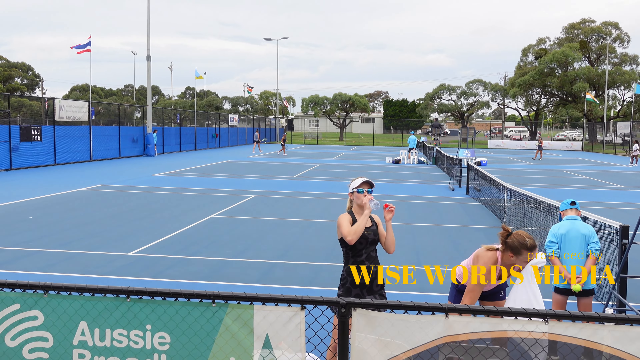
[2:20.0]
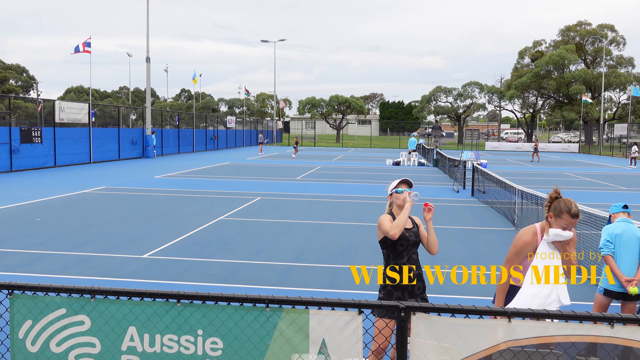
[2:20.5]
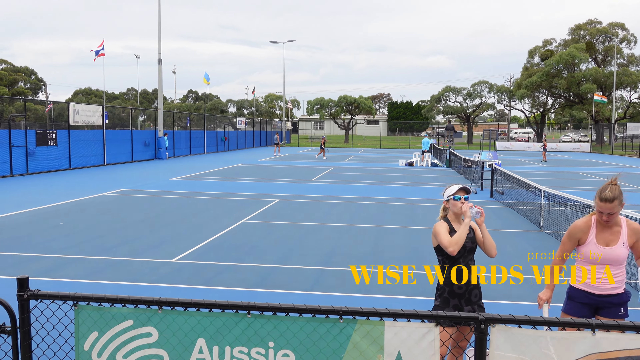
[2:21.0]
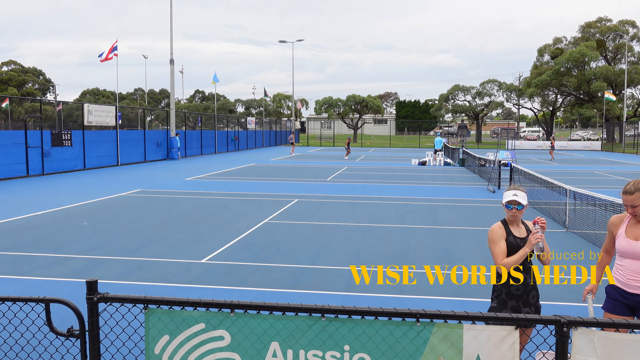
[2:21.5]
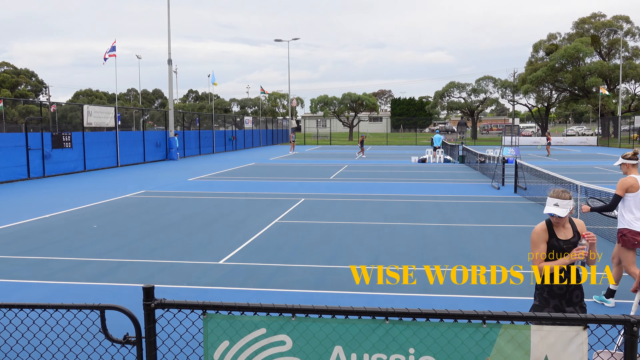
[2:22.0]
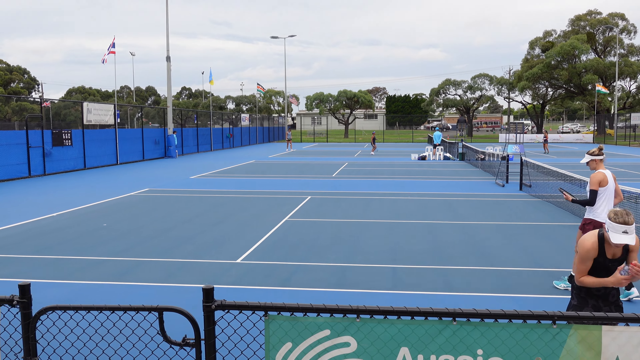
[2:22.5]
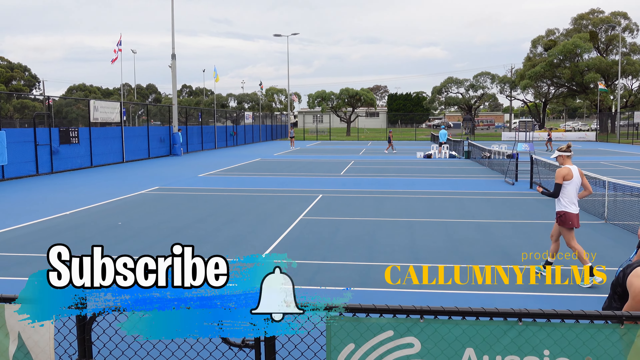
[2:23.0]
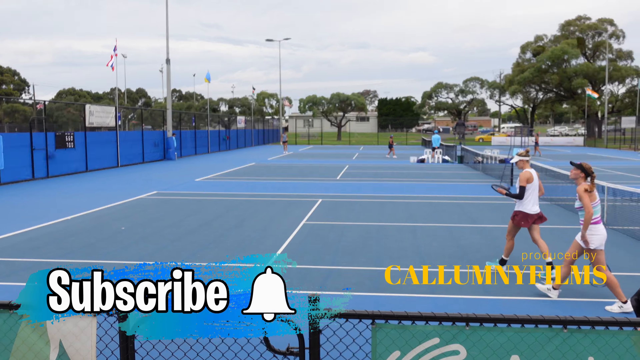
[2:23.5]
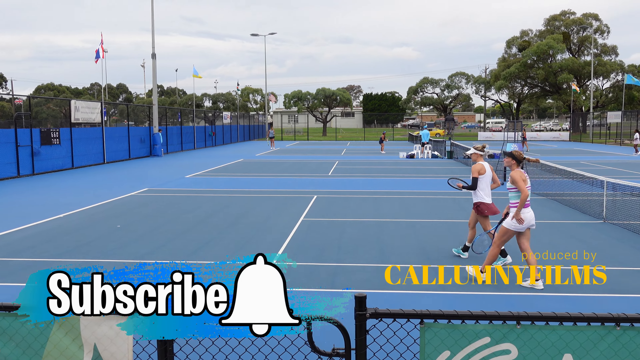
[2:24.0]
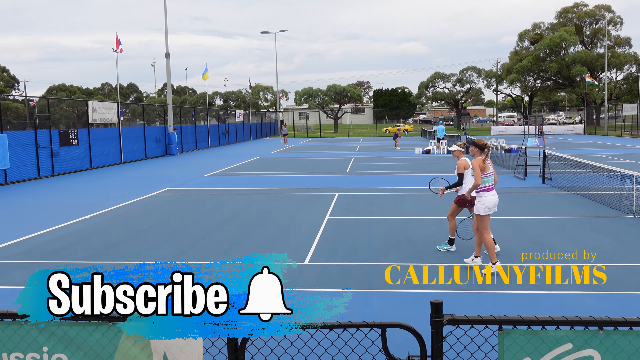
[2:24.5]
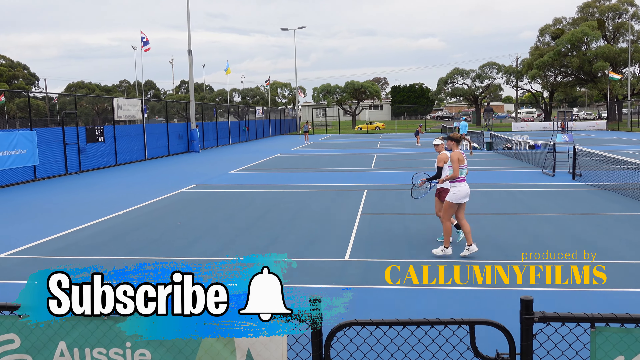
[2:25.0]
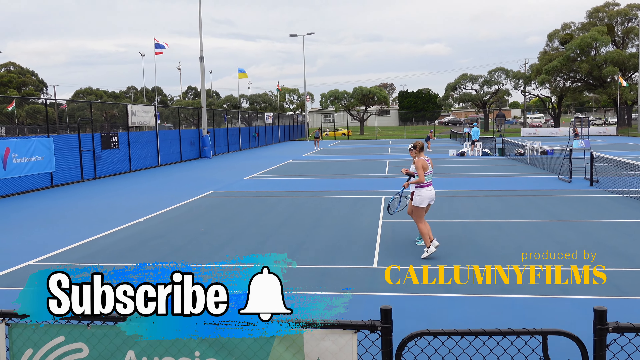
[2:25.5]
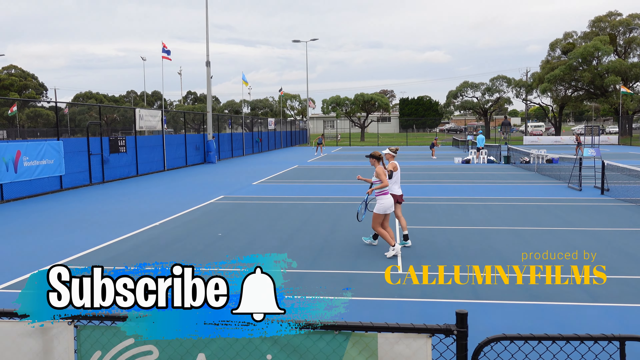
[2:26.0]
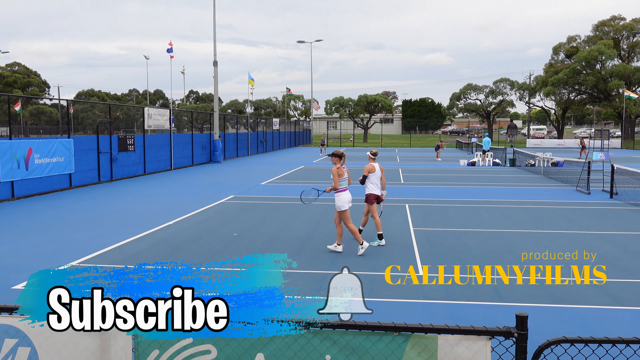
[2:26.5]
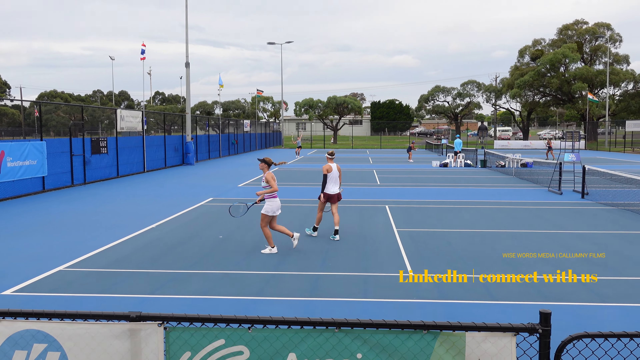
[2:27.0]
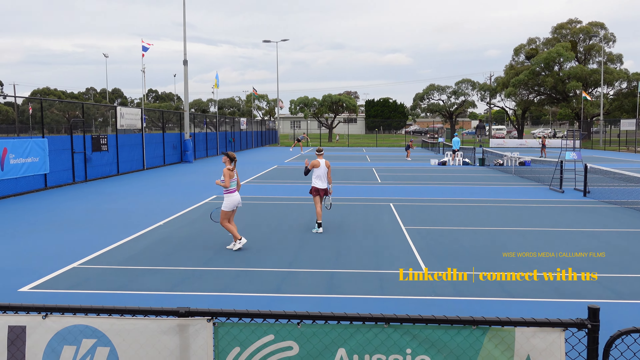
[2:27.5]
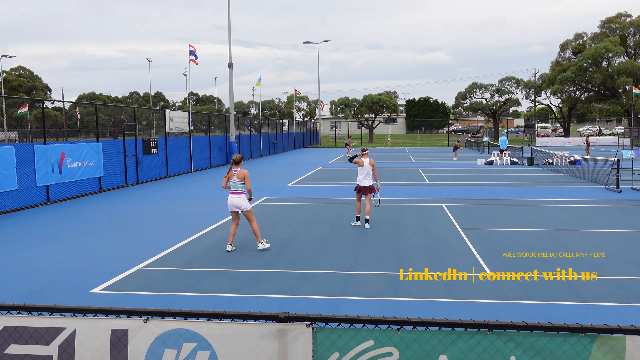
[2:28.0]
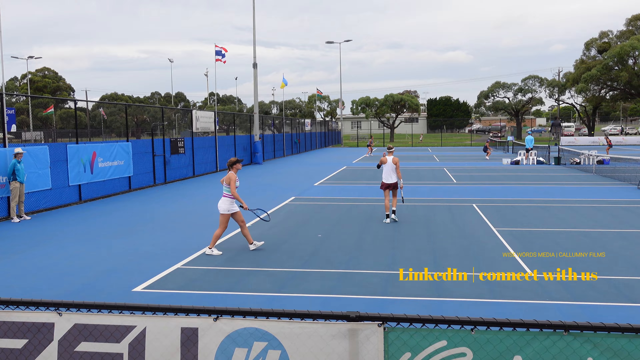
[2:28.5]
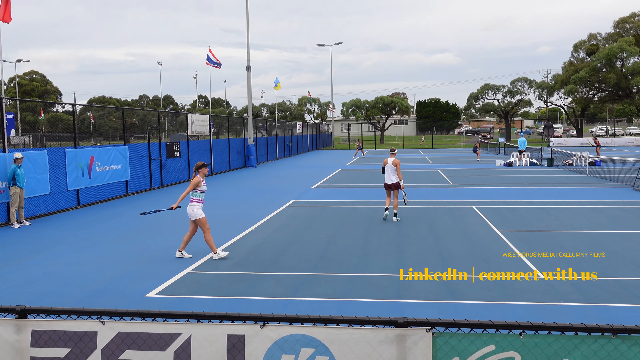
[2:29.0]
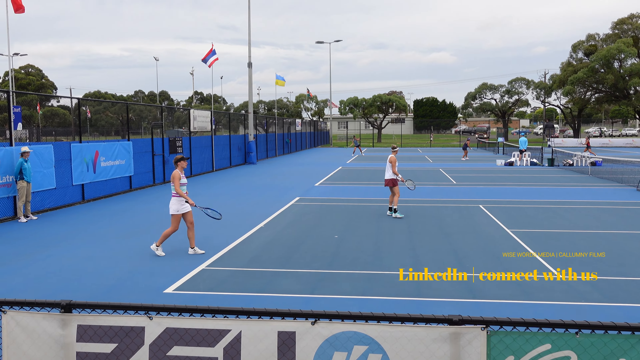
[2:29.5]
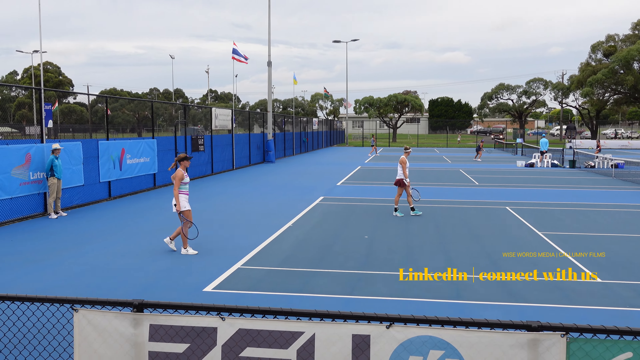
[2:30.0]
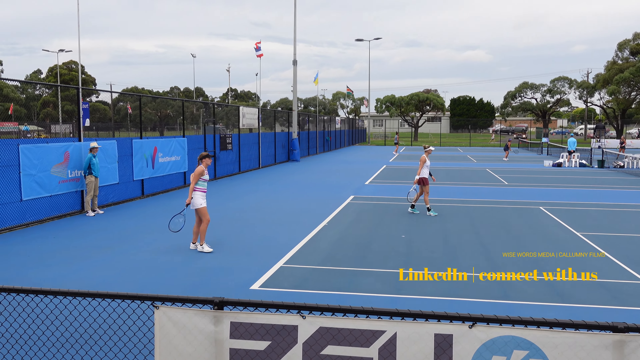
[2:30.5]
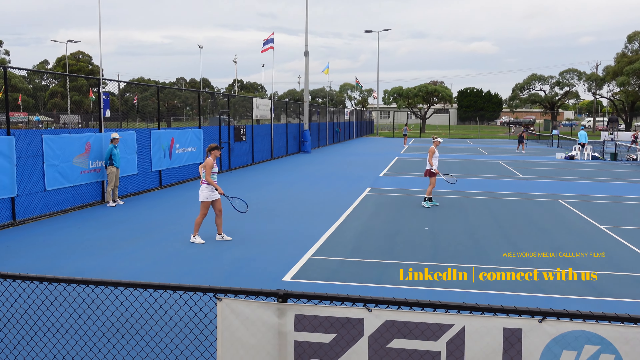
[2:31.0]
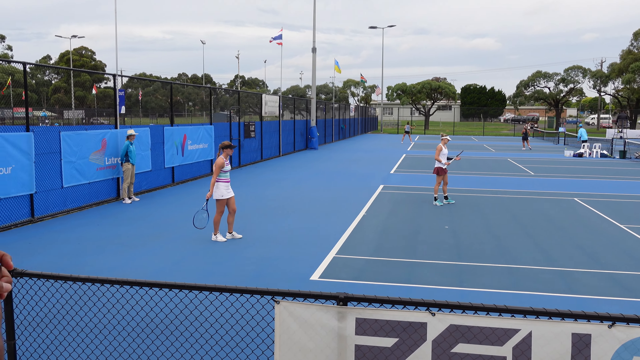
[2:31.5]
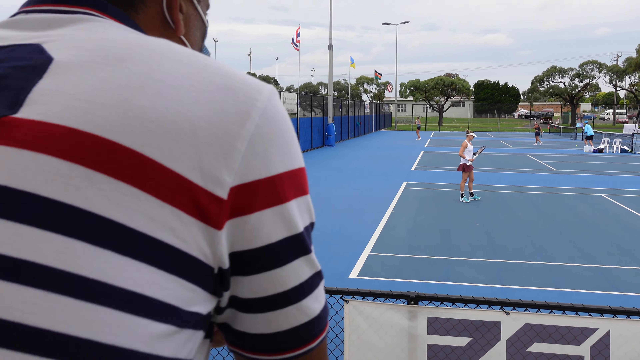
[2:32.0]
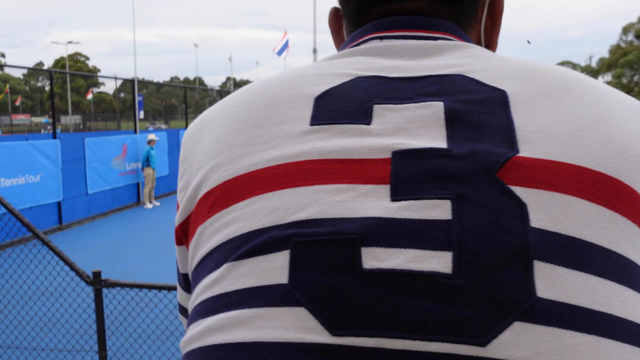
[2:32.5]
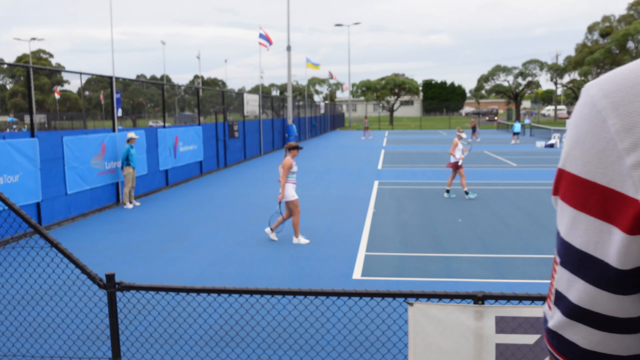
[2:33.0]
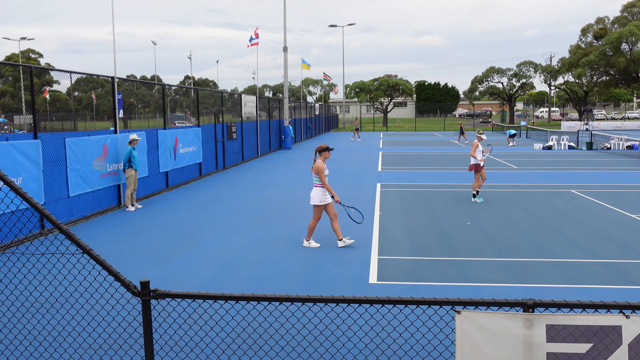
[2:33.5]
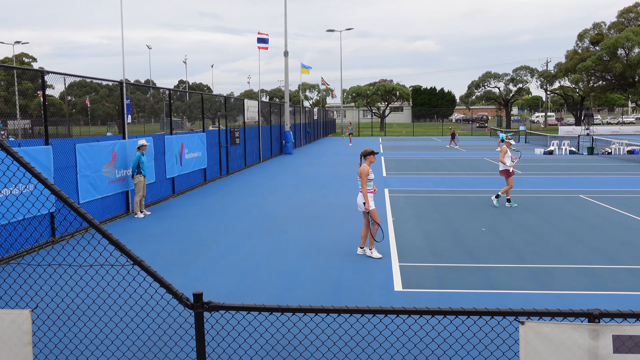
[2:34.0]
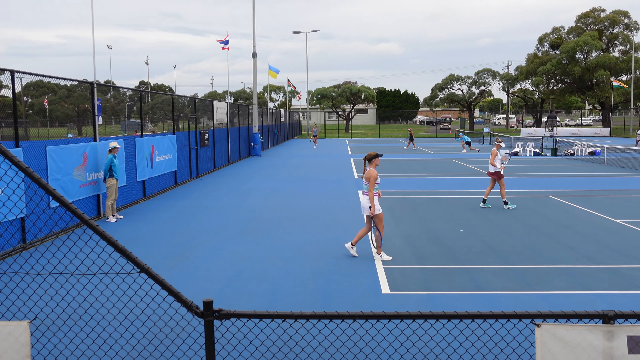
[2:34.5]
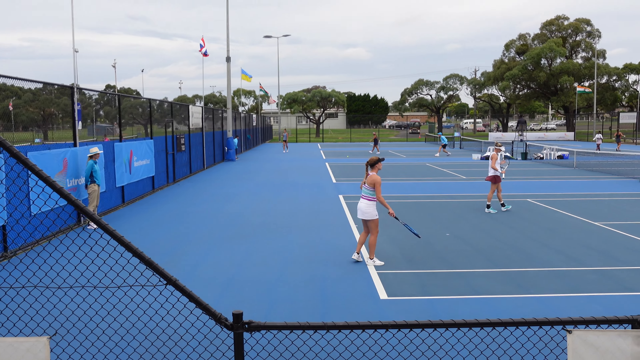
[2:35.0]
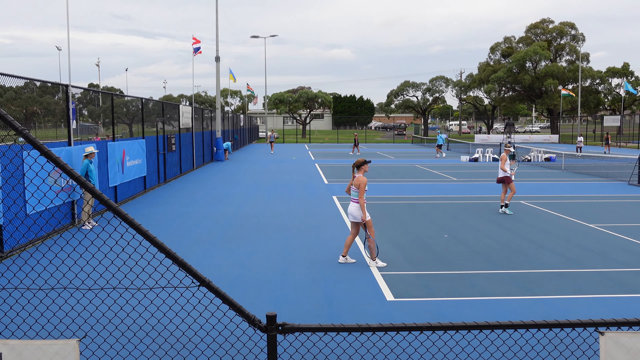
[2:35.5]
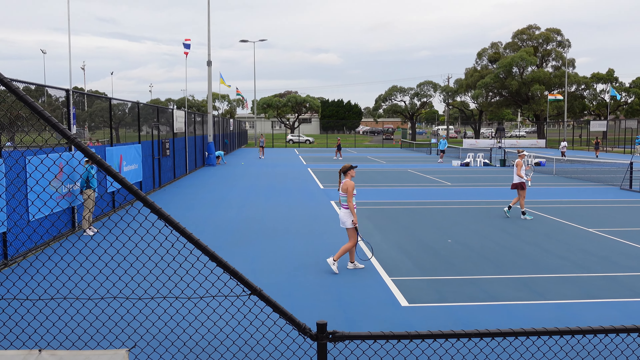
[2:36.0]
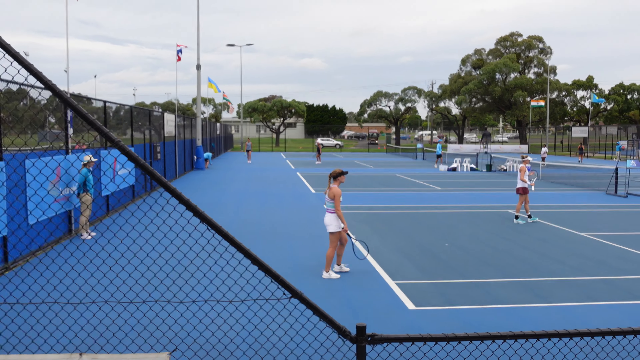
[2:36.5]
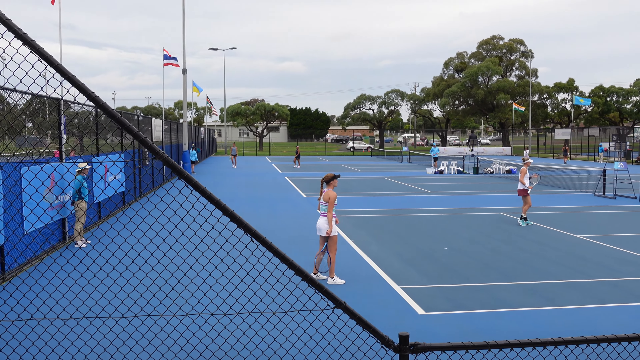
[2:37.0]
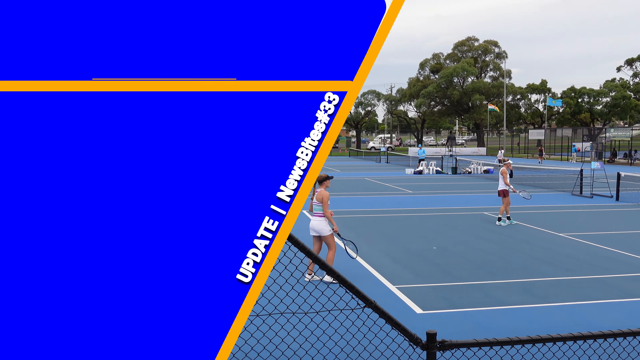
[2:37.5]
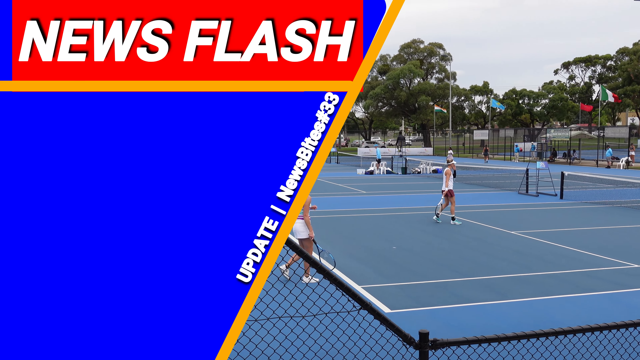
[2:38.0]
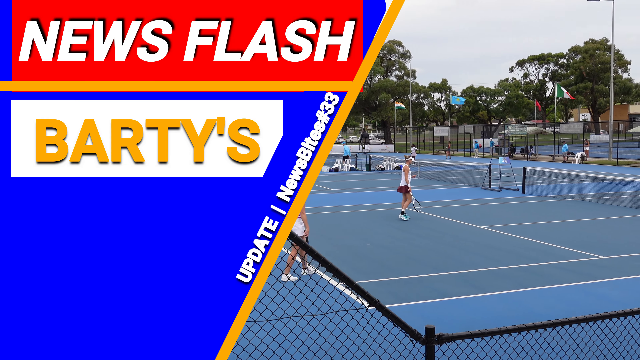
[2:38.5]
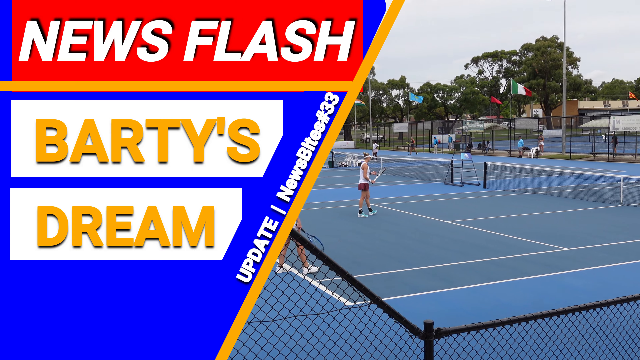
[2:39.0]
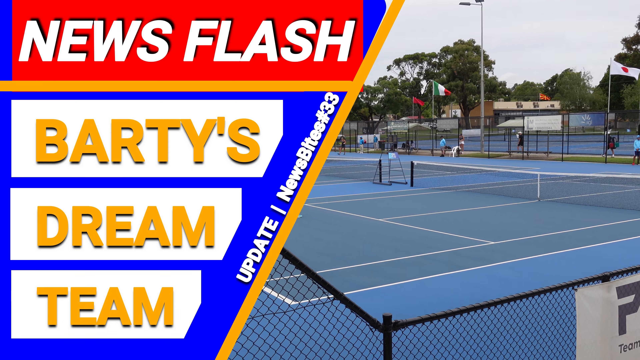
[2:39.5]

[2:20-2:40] The players are on a water break and no one is playing. There is a set of three tennis courts, and the view is at the leftmost court, closest to the camera. One of the women drinks some water. The other two women on one team go back onto the court, fist bumping each other as they walk, and the women get ready for the next round. Text on the video shows a subscribe button and reads "Produced by Callum Y Films". A spectator wearing a mask is very close to the camera, seen from the back, in a shirt with a number three in blue. Umpires are on the right-hand side, and cars drive on a nearby road. The video ends with the text "Newsflash Barty's dream team update news bites number 33".